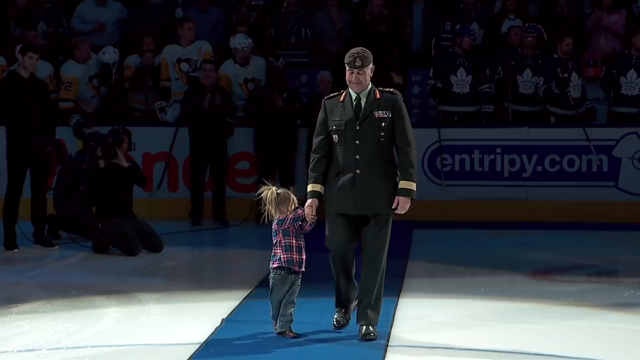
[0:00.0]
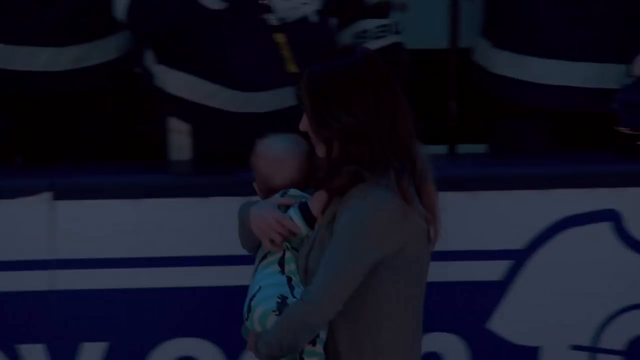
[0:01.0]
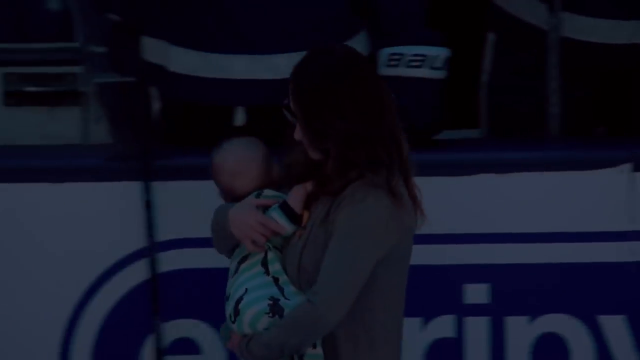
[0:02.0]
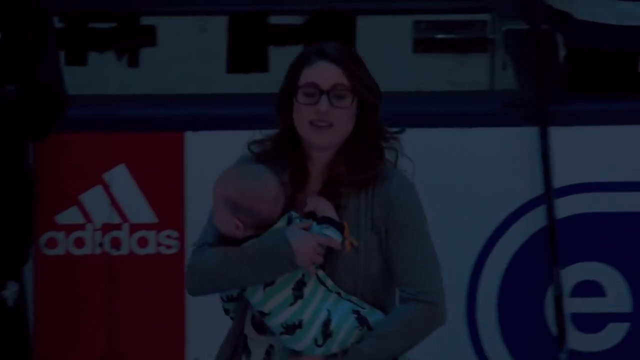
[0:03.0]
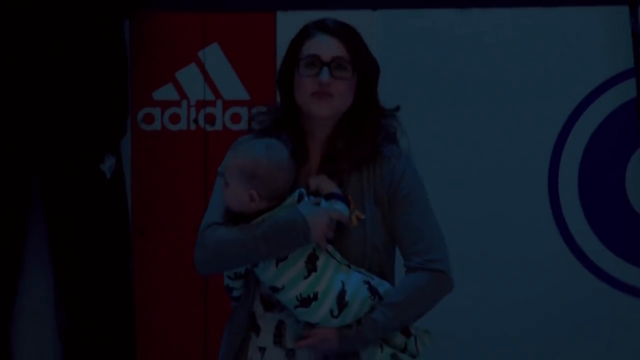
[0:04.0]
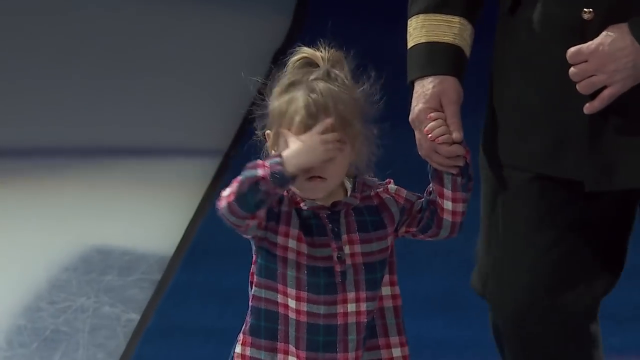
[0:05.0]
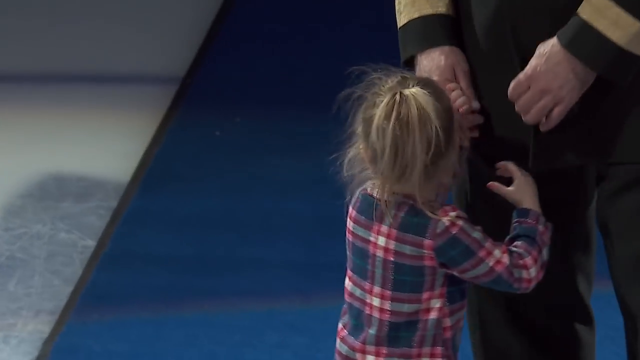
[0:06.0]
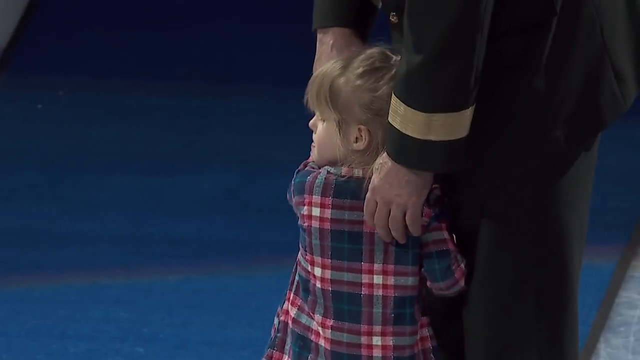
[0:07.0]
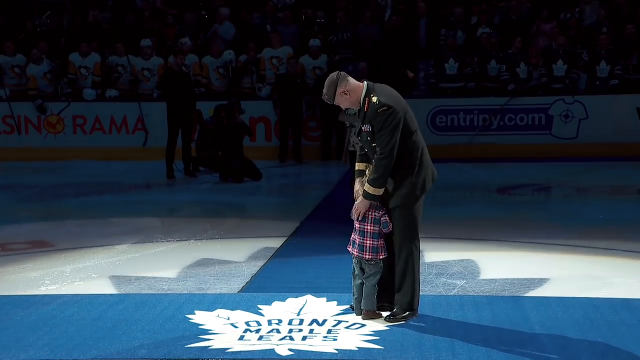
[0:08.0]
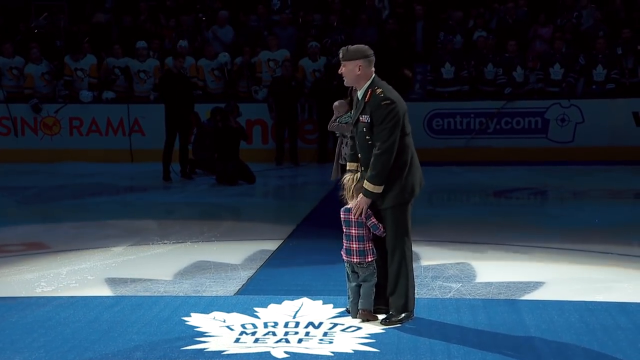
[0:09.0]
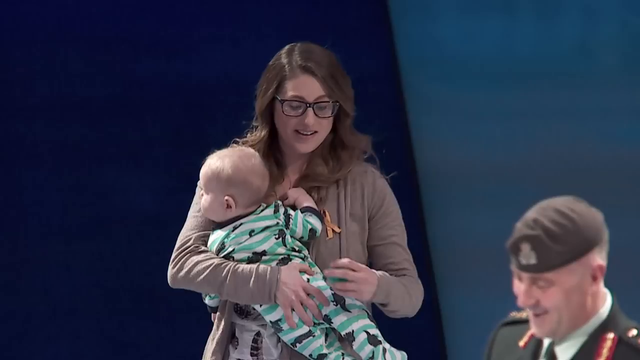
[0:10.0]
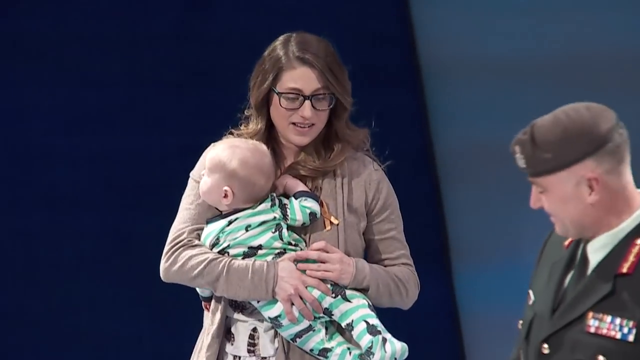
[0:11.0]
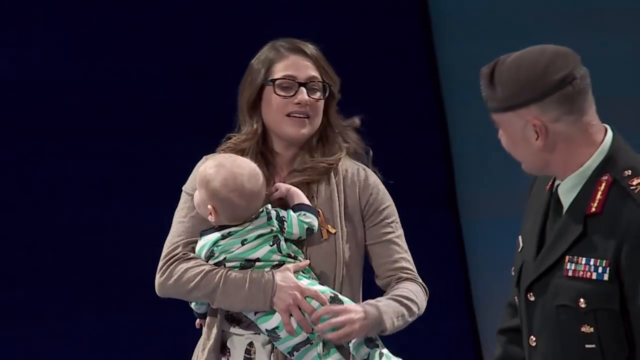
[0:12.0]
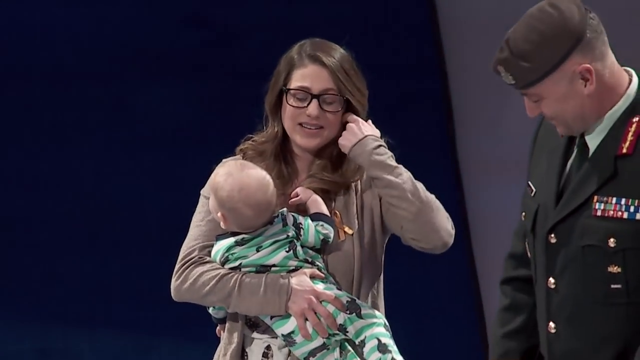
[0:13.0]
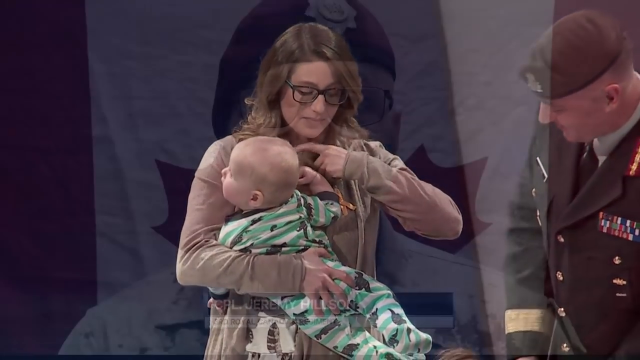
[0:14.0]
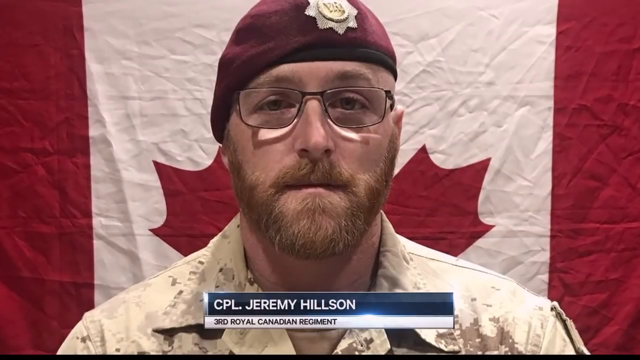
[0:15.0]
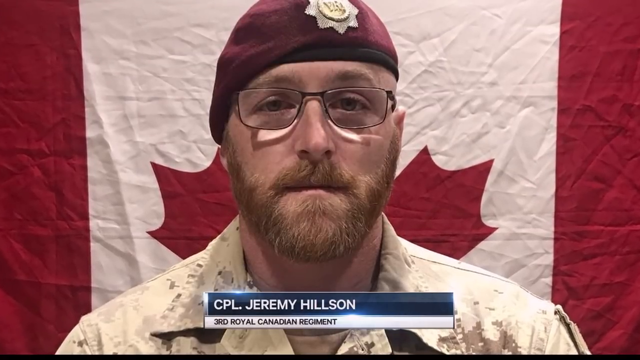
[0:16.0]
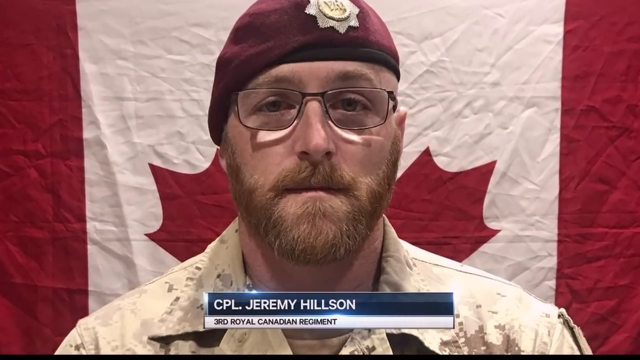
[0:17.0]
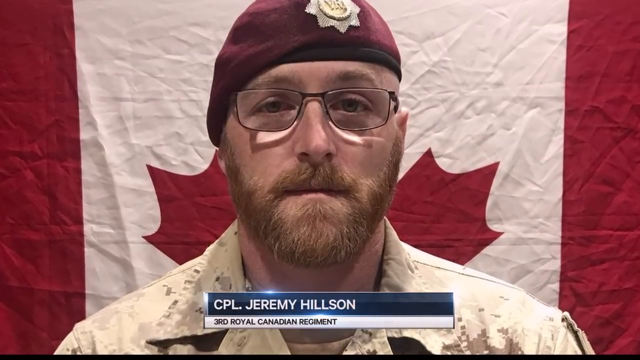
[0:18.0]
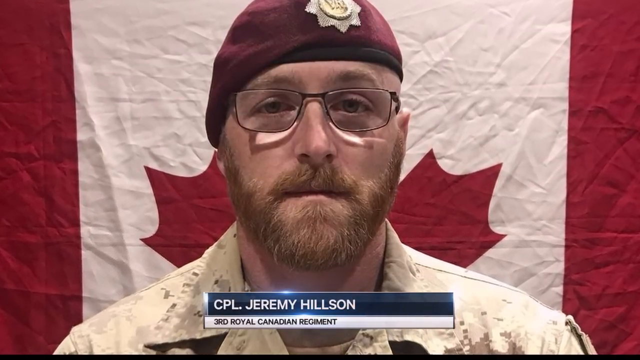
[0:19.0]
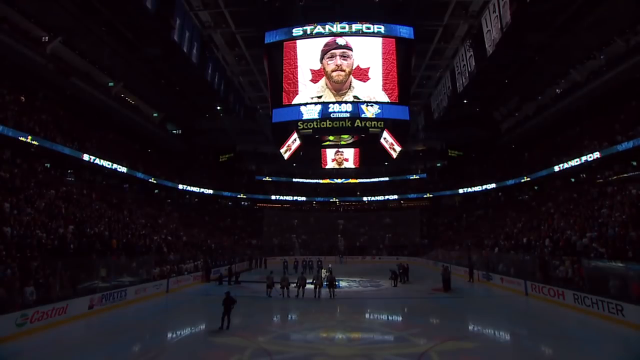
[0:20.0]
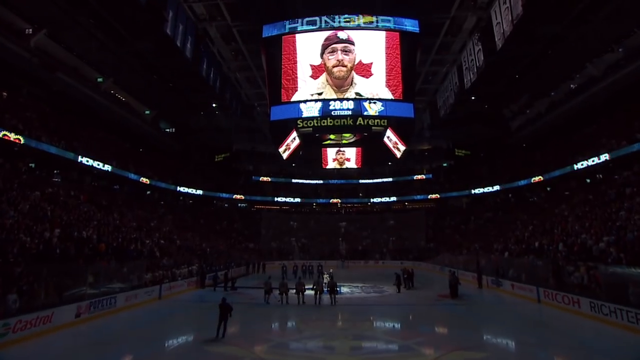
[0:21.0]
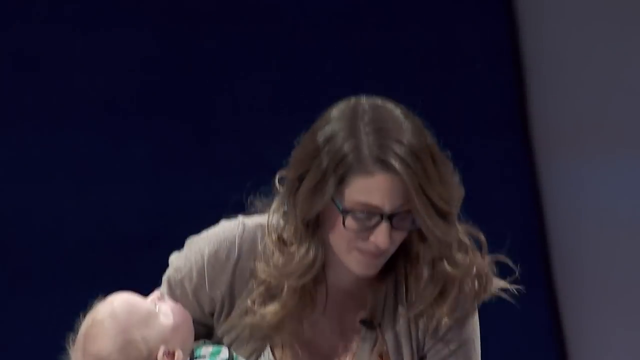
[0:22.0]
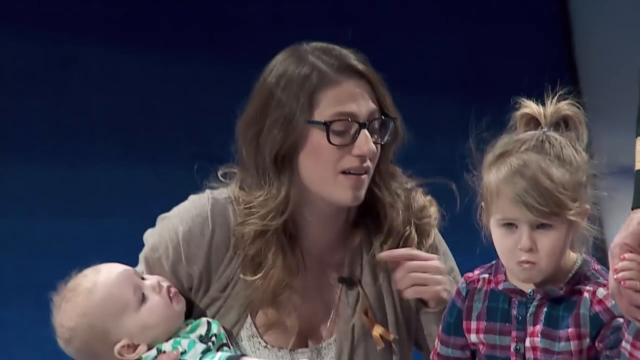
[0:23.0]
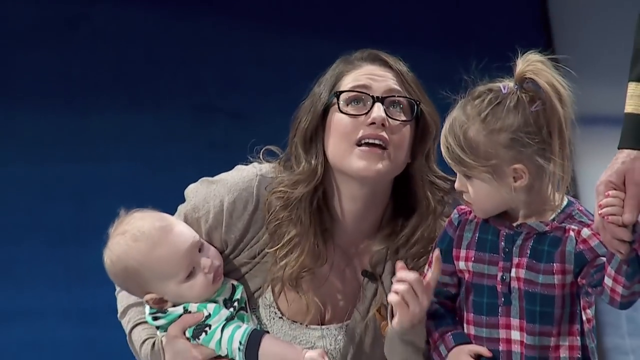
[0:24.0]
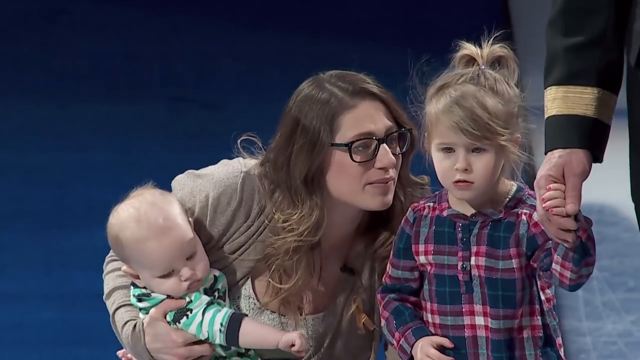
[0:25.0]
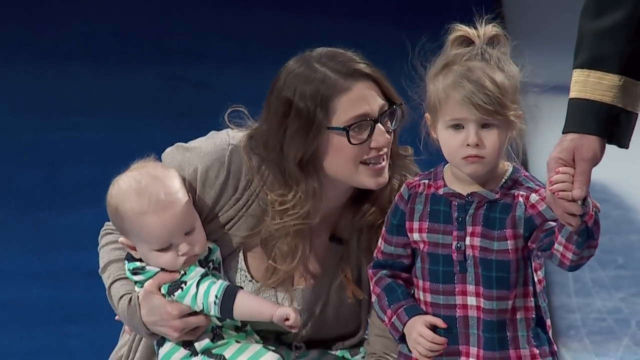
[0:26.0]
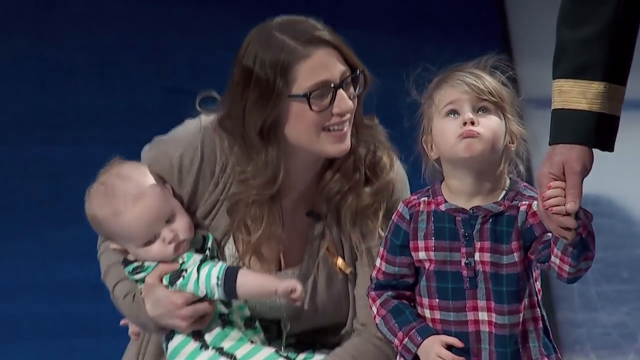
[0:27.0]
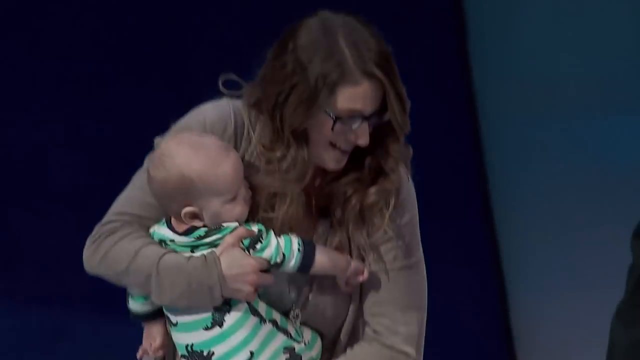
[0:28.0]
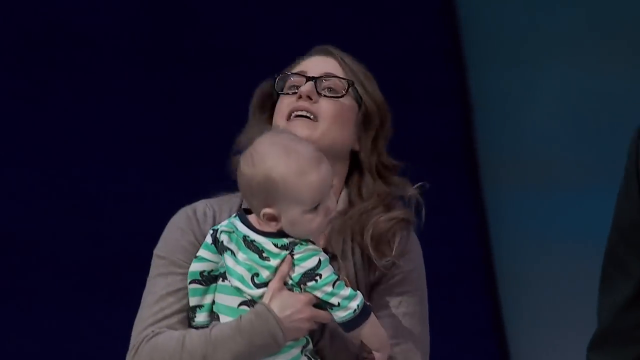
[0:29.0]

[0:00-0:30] A soldier, apparently a military man, all dressed up, comes across on what looks like a blue rug laid out for him. He looks down at a little girl who looks almost on the verge of tears, holding her hand over her face. Another shot shows what looks like a newborn, which the mom holds with one arm over the other, her right arm wrapped around the top; they seem to be walking down to join. The girl appears to have Down syndrome; her face is briefly visible before she suddenly turns around, and the mom joins the man. Next comes a man identified as Corporal Jeremy Hilson, standing with a Canadian flag behind him. He wears a red beret with a multi-pointed badge or star that looks diamond sequenced and says "vr" on it, glasses, and what looks like a camel collared shirt, and he has a short reddish beard. The view zooms in on him, apparently a still picture, and then he is shown on the teleprompter at the hockey game, with text saying "to stand for him." The game has not started, so this seems to be an opening ceremony before the game. The man in the dress uniform smiles as he turns to look at the woman, who holds the baby in her arms as she comes to join him.